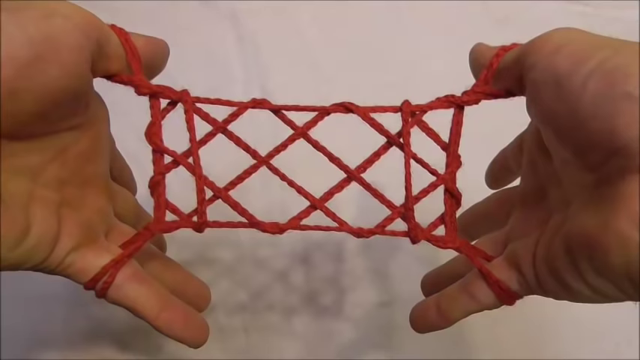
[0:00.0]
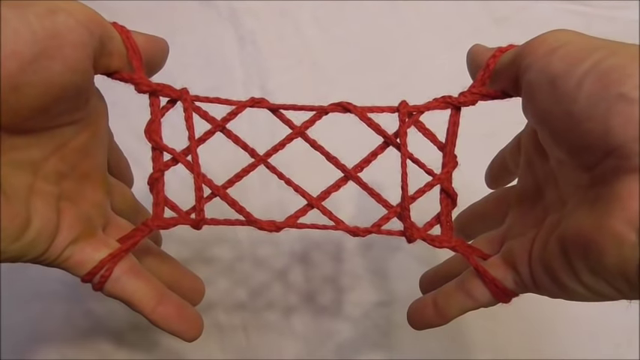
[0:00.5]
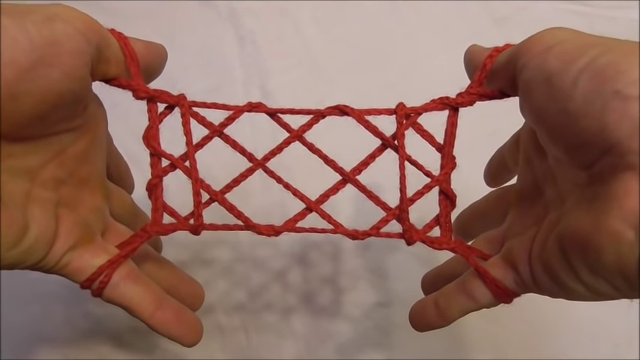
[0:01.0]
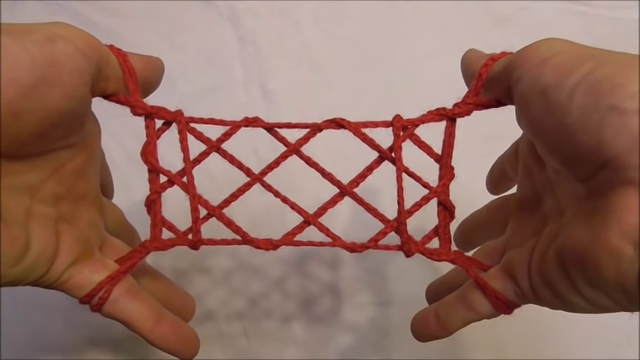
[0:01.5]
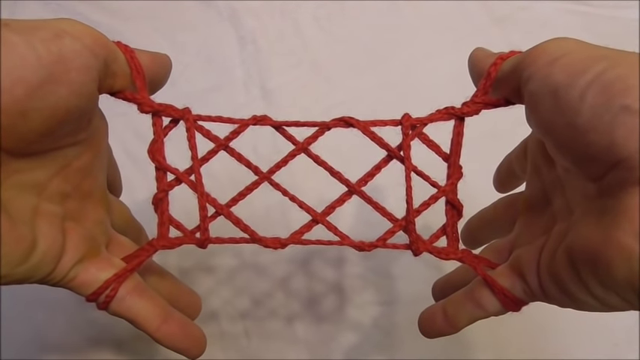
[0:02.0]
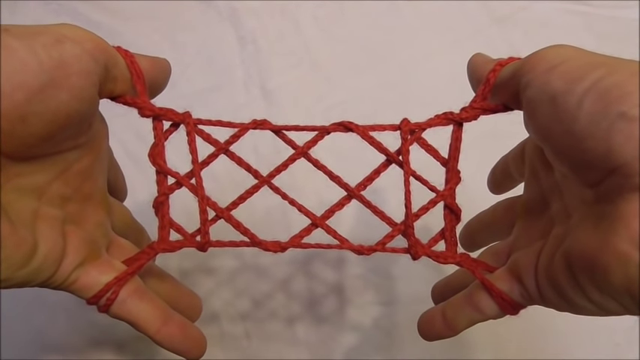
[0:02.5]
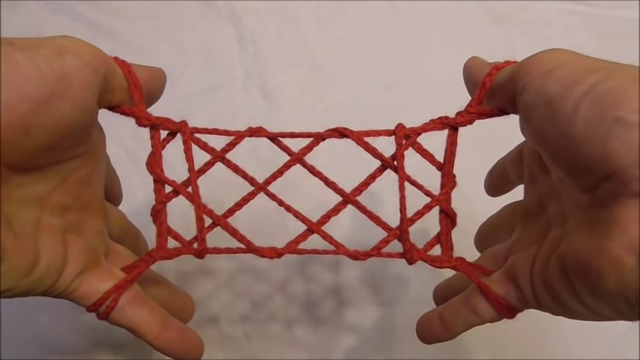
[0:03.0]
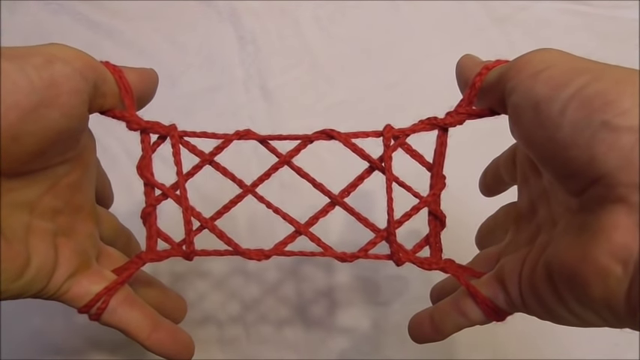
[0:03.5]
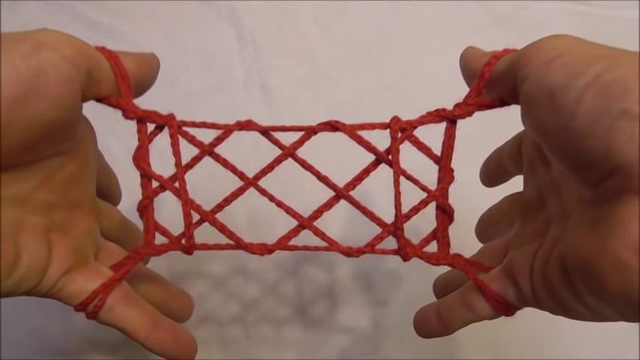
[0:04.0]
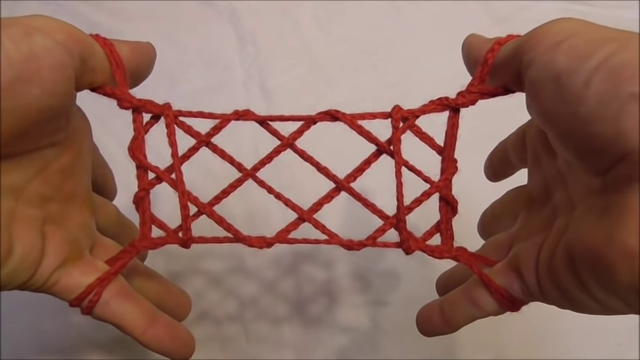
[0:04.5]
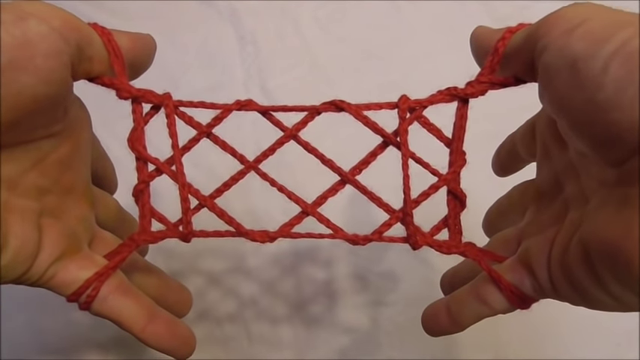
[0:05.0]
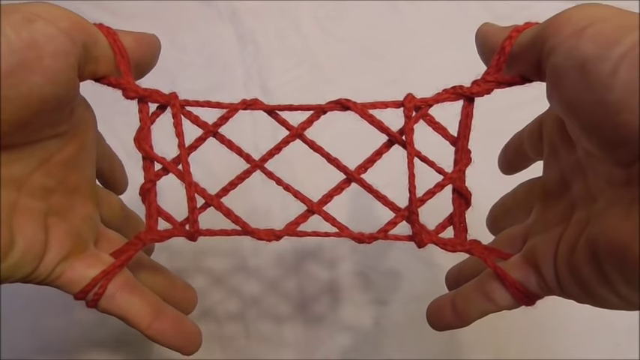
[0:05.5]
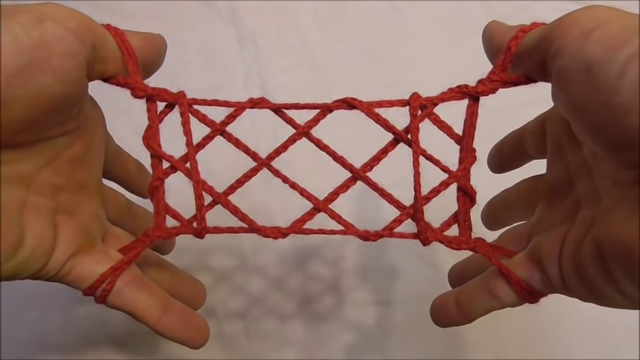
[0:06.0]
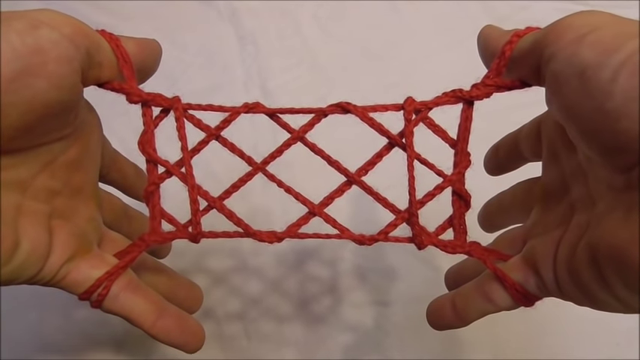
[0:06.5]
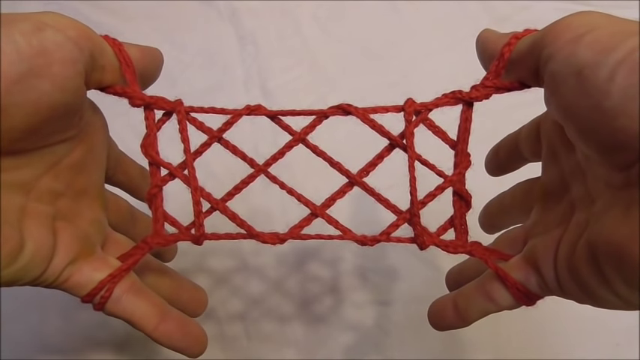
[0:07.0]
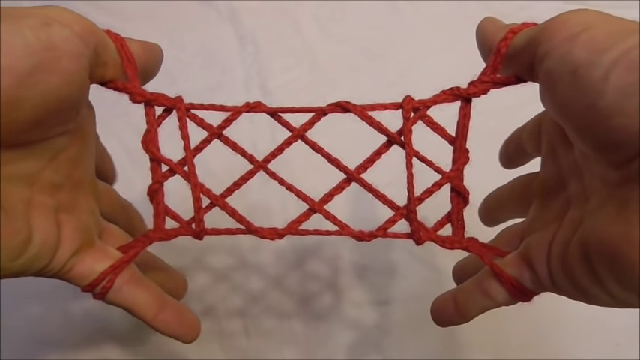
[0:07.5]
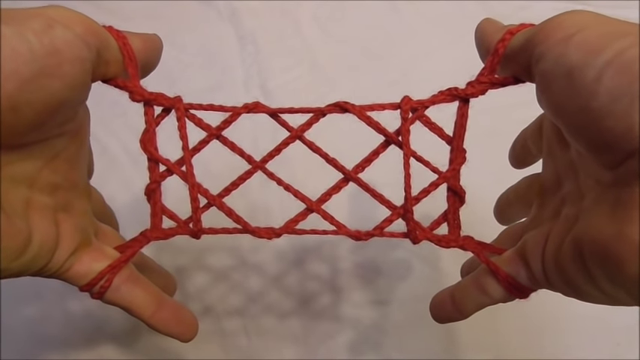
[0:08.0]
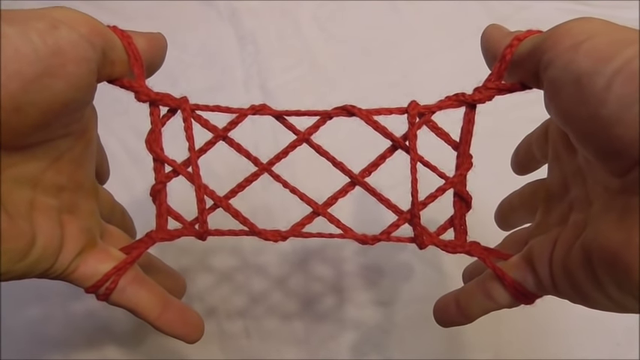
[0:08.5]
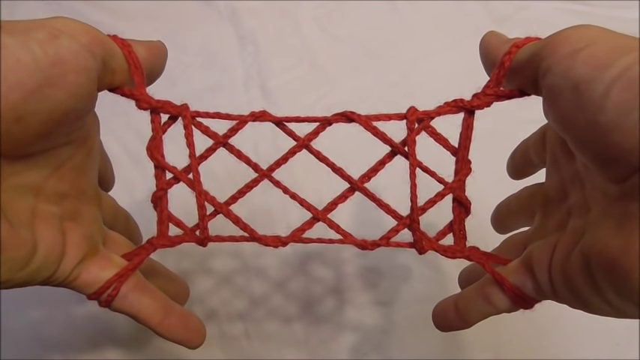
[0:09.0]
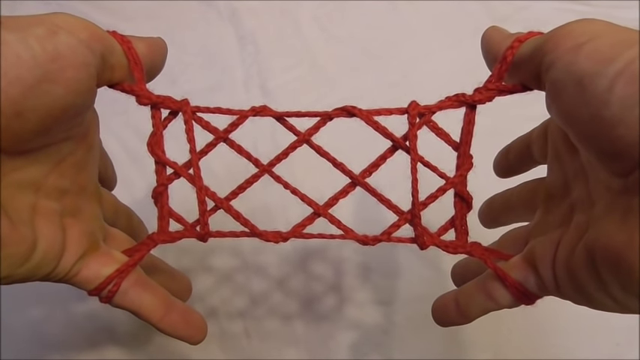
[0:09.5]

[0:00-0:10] Two Caucasian hands are on the left and right sides of the frame, against a background that appears to be a fluffy white linen sheet. Between the hands is a red crocheted pattern in a crisscross style; in the middle, the crisscross forms rectangles in a diagonal shape. The fingers of both hands move from left to right. The red pattern is connected to the man's thumbs and index fingers on both the left and right hands.